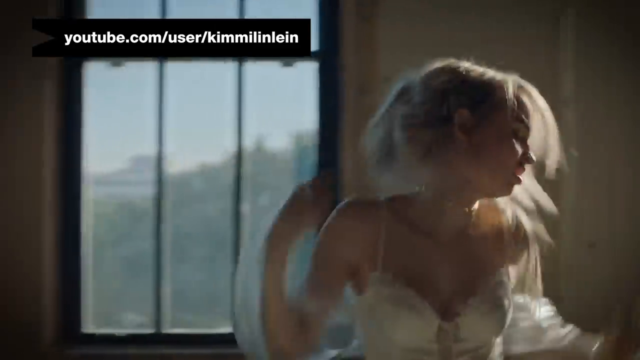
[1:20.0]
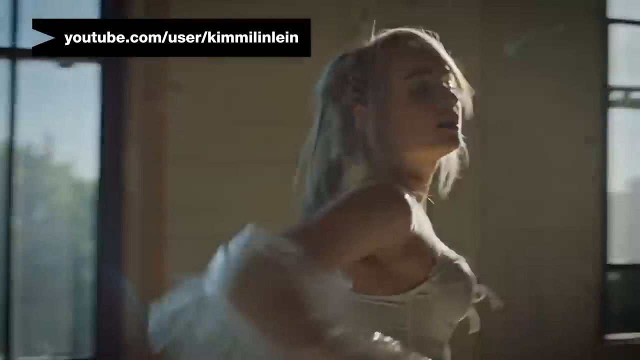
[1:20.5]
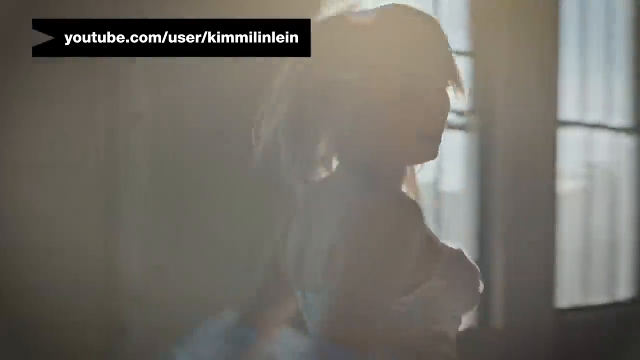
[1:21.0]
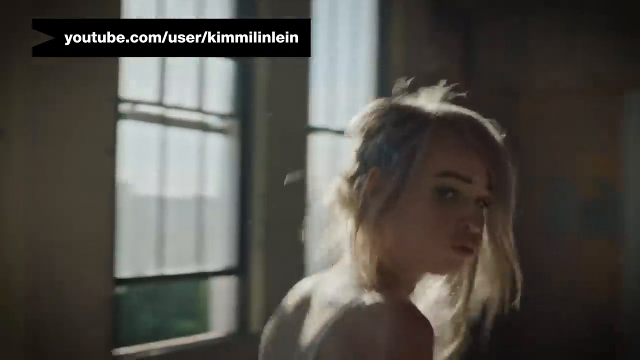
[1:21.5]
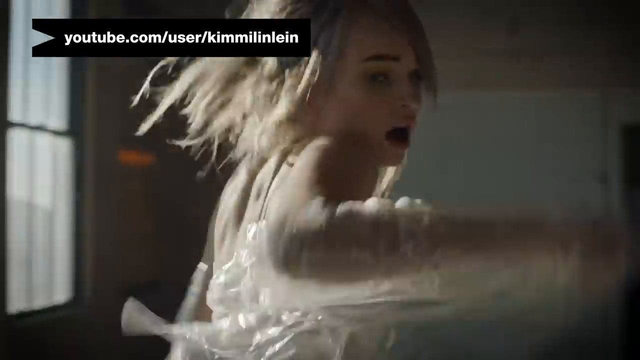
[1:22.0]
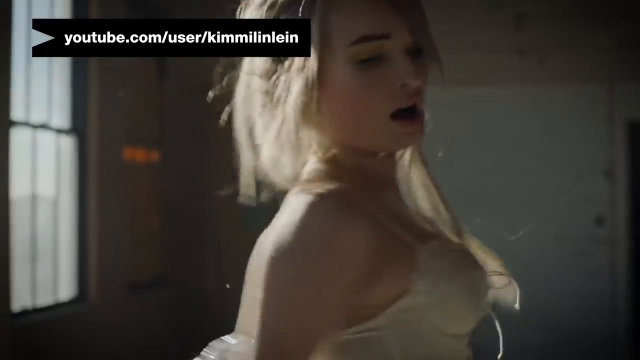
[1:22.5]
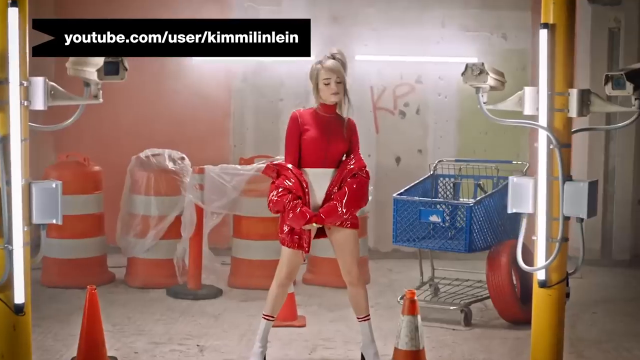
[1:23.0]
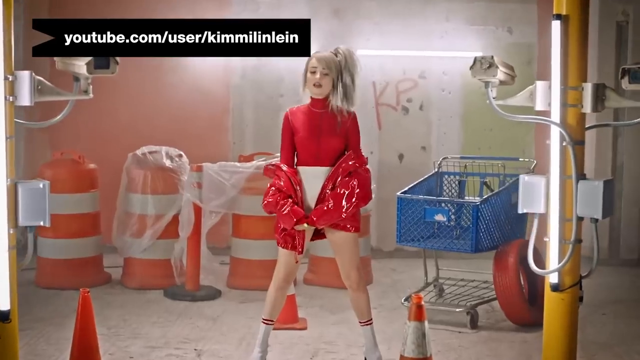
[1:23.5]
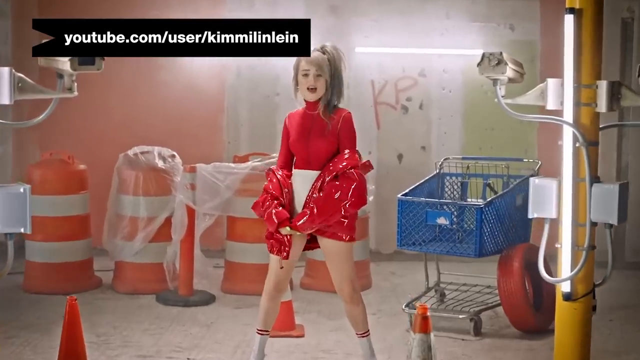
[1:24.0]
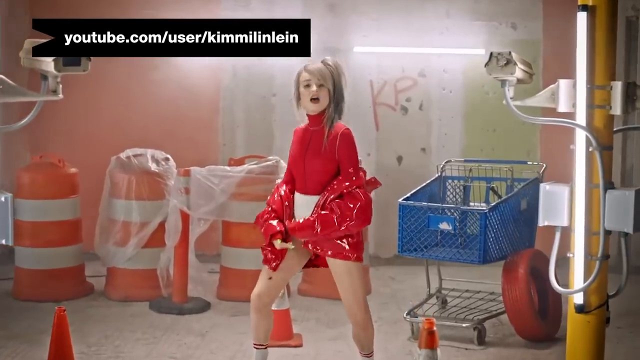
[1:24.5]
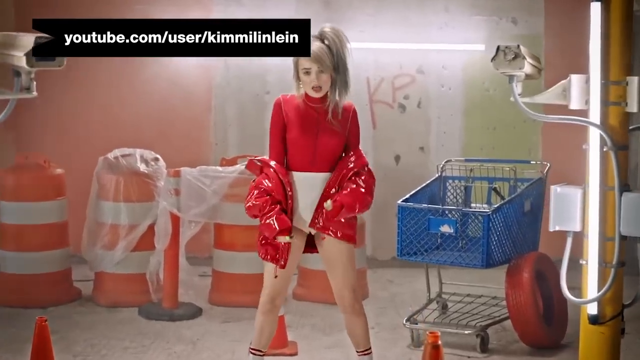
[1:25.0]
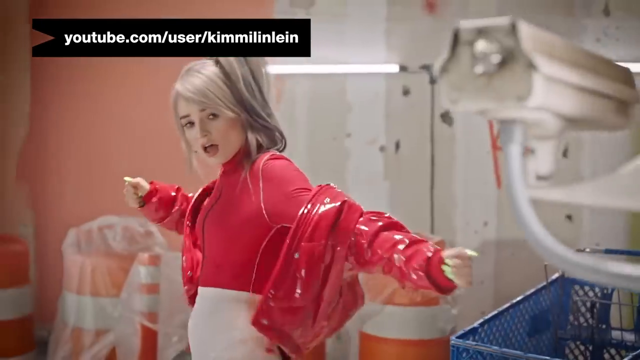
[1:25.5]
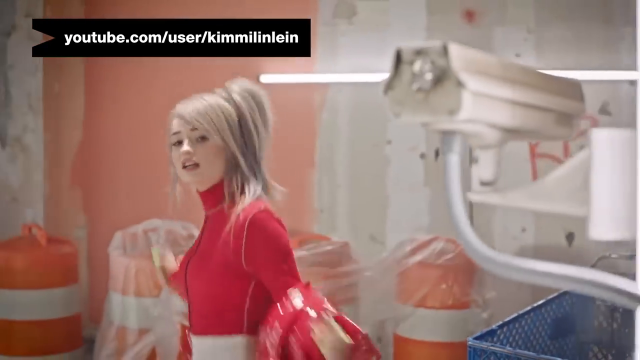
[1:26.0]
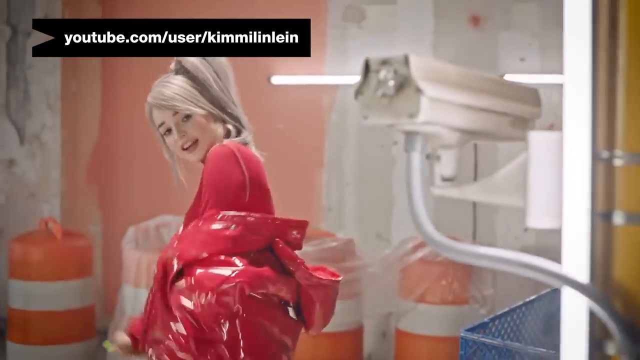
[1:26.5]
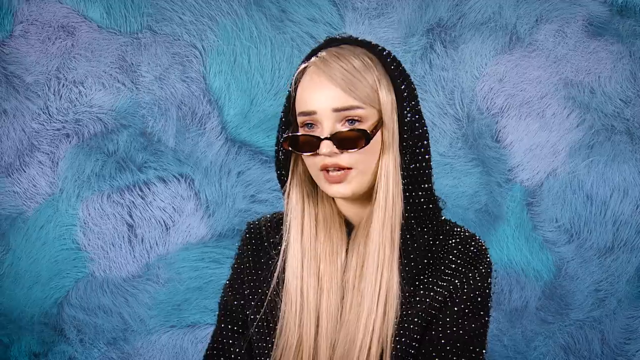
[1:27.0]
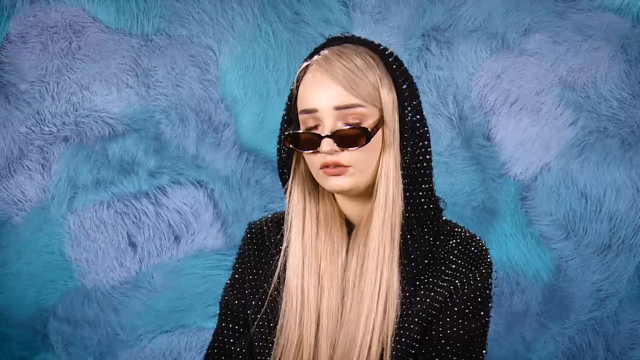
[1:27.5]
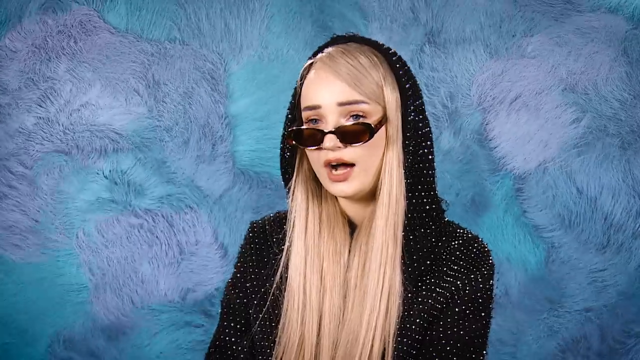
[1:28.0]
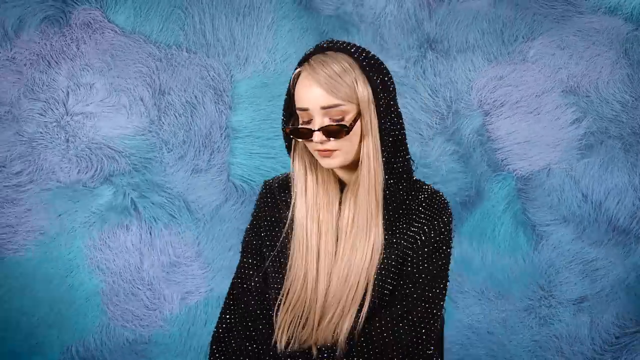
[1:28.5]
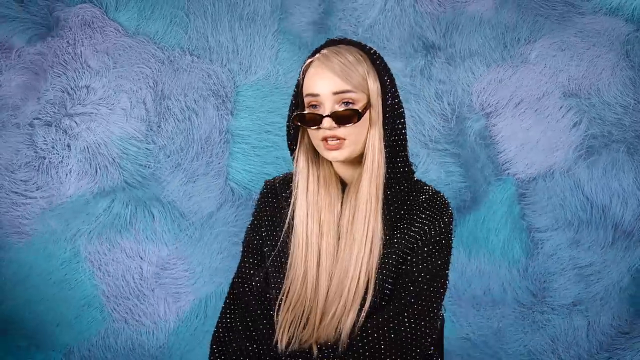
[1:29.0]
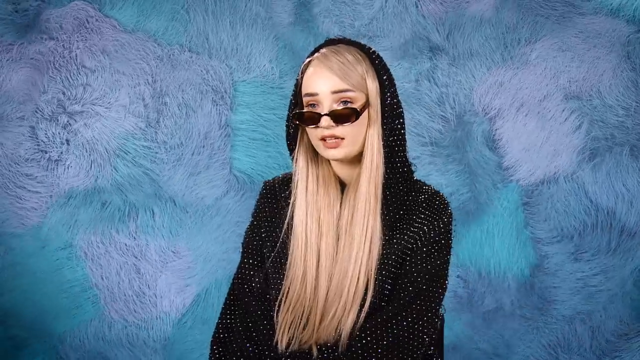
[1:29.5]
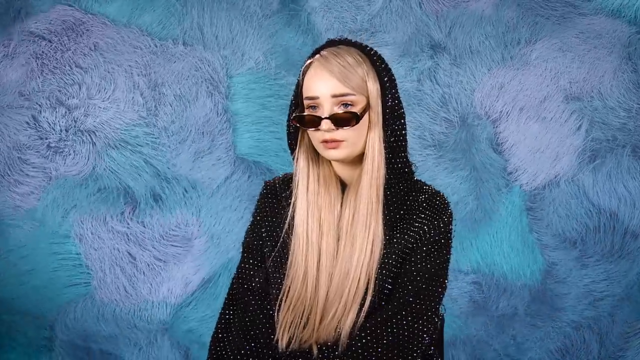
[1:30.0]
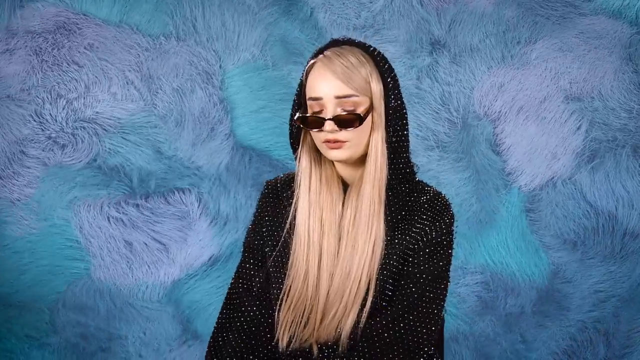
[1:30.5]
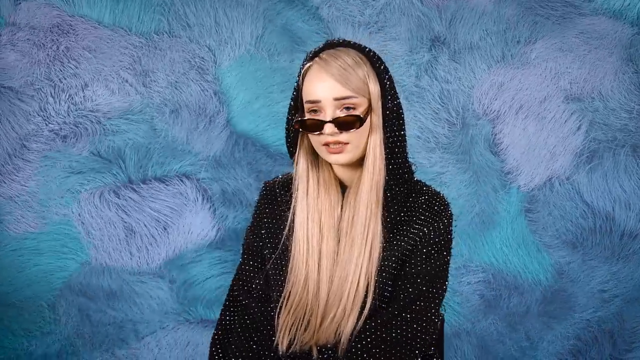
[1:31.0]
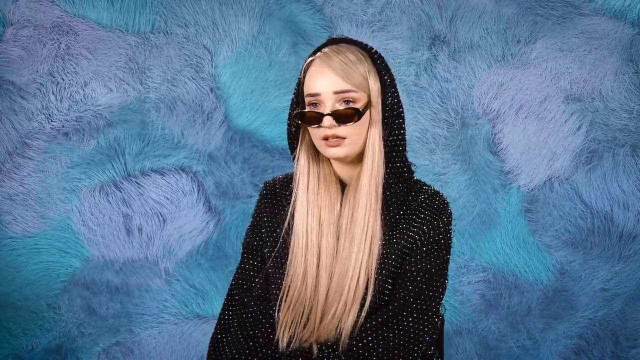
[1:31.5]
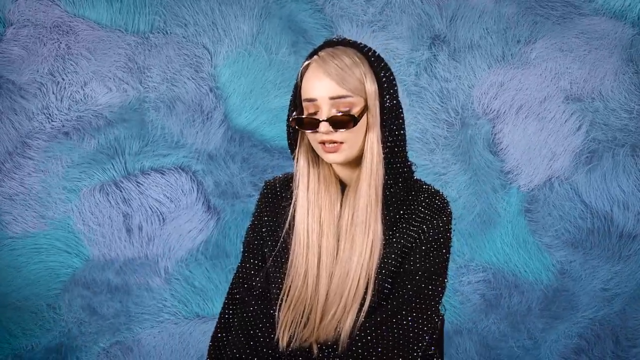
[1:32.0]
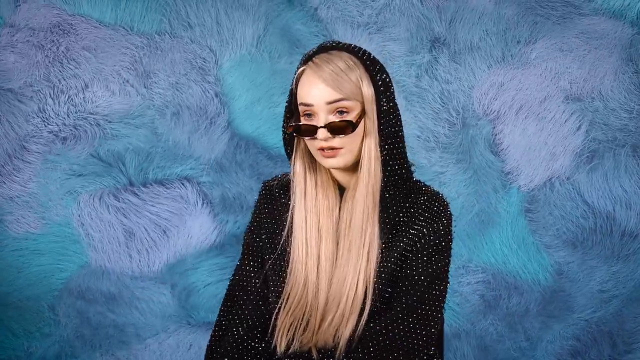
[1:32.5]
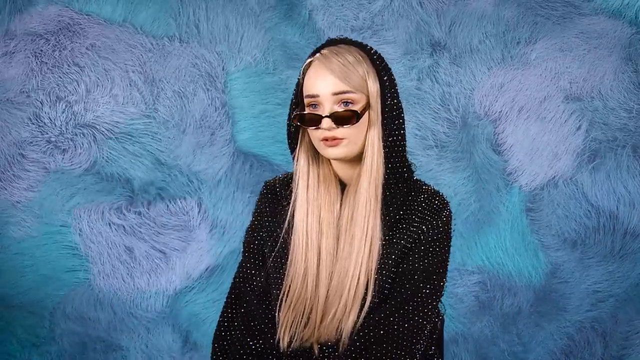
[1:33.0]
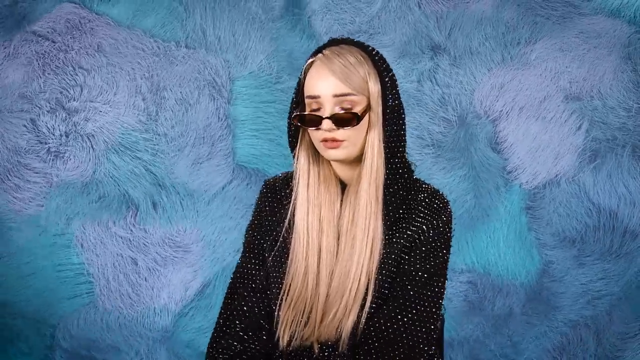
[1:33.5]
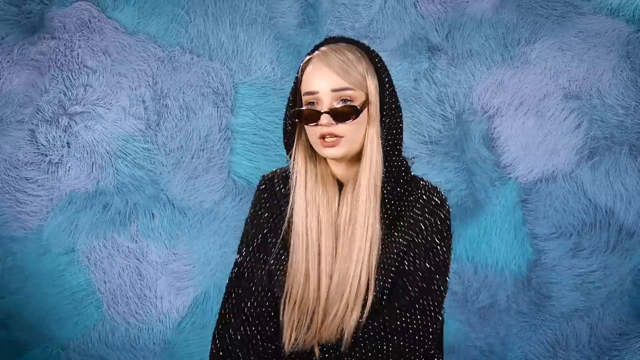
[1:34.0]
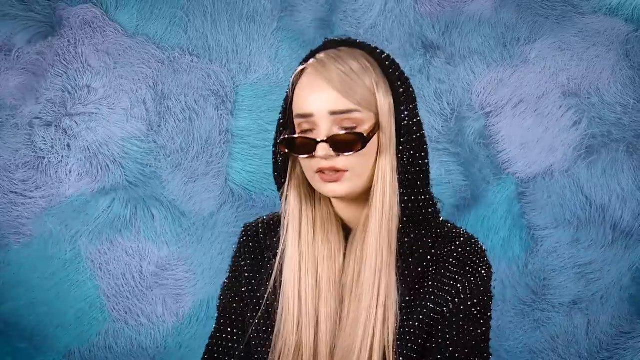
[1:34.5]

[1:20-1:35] A person with very fair skin and long blonde hair tied up dances while the camera moves around behind them; the person looks over their shoulder directly into the camera, singing and dancing. They wear a white top and a white see-through jacket. The scene changes to the same person dancing and singing in a different setting, with traffic cones or something similar behind them. Here they wear a red long-sleeved top, very short white shorts and a red jacket, with their hair tied up in a high ponytail, and there is a blue shopping cart next to them.